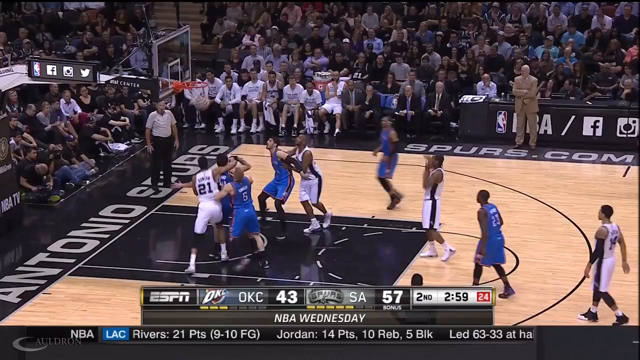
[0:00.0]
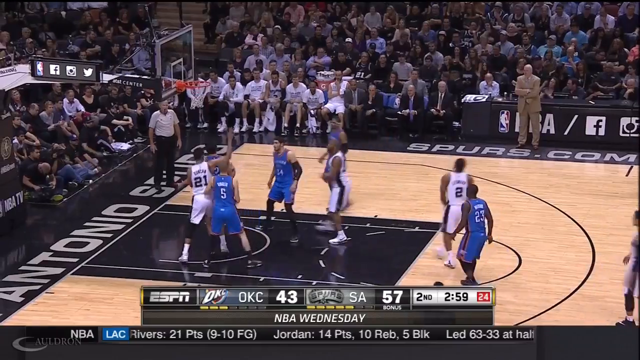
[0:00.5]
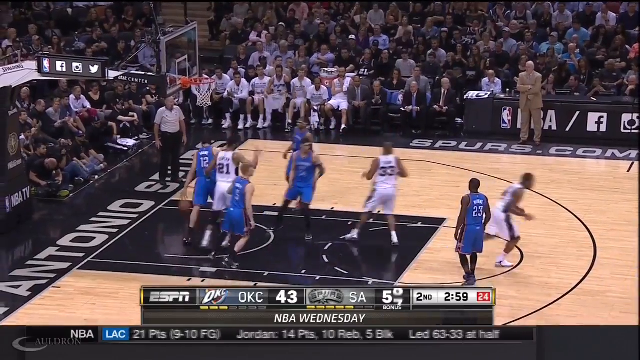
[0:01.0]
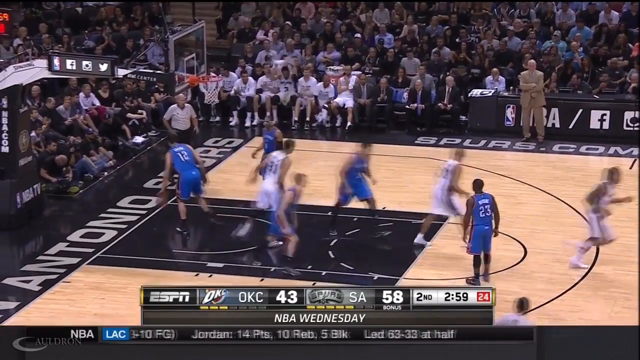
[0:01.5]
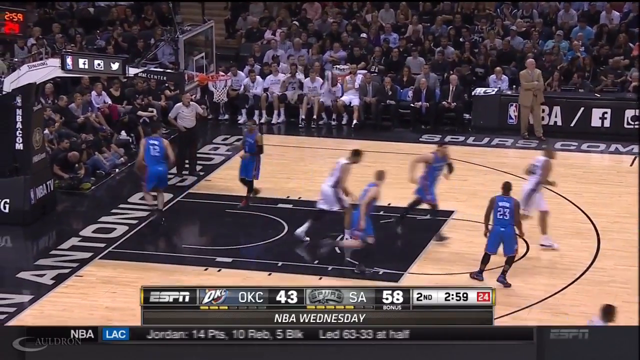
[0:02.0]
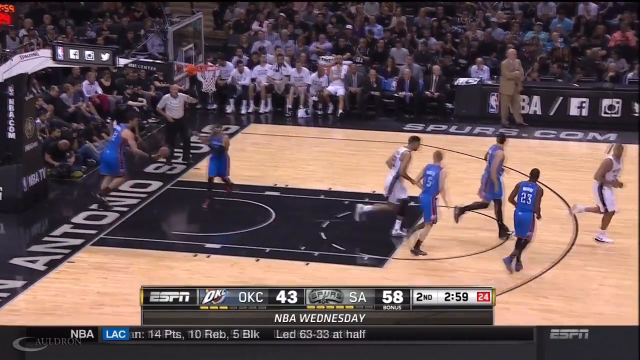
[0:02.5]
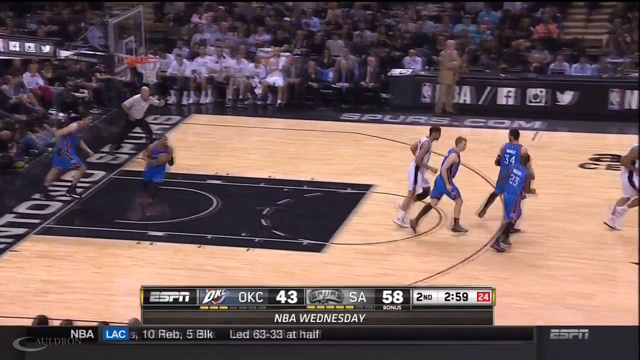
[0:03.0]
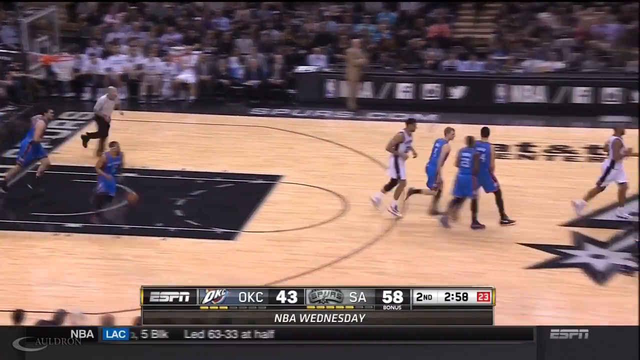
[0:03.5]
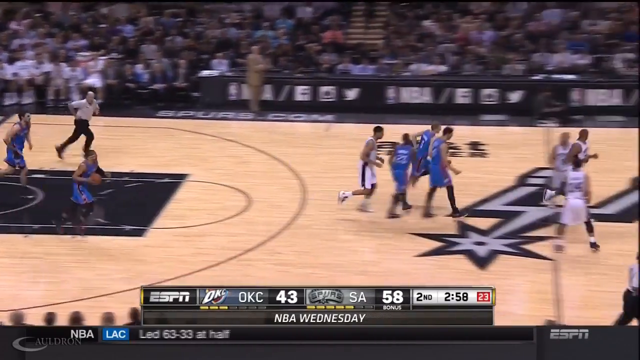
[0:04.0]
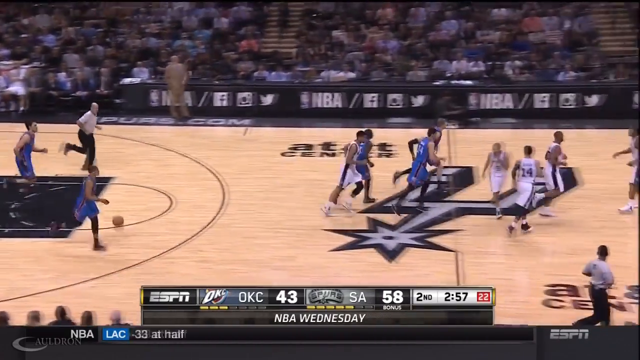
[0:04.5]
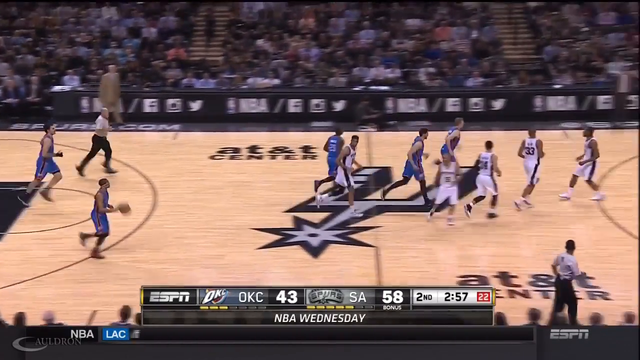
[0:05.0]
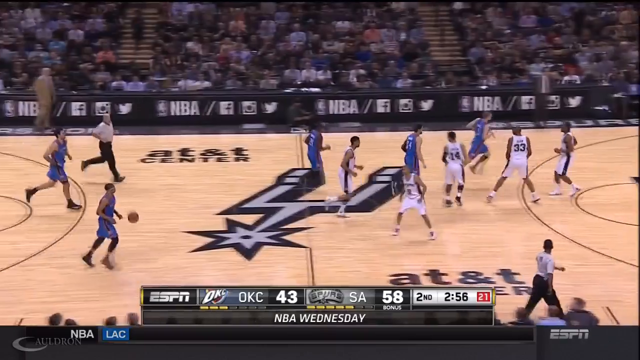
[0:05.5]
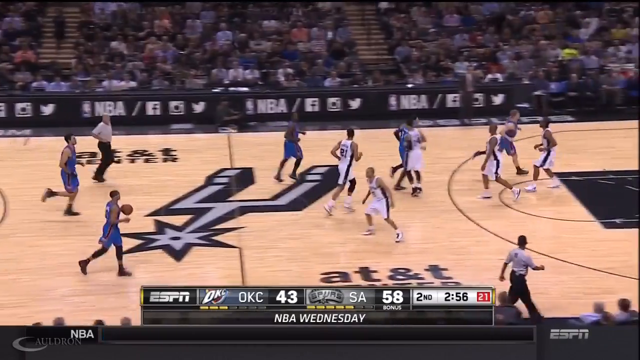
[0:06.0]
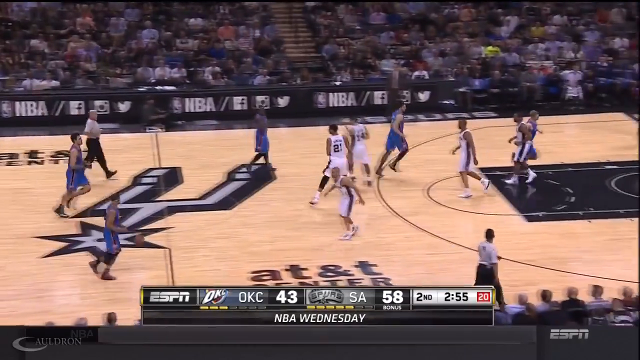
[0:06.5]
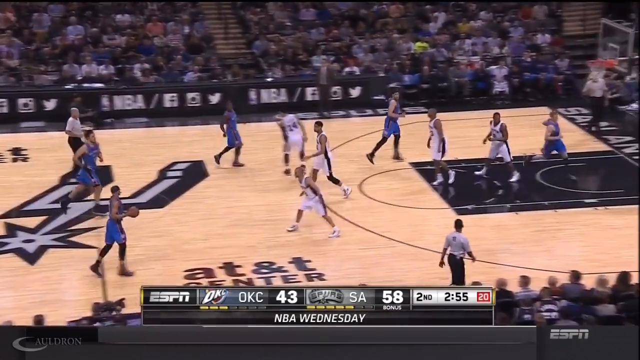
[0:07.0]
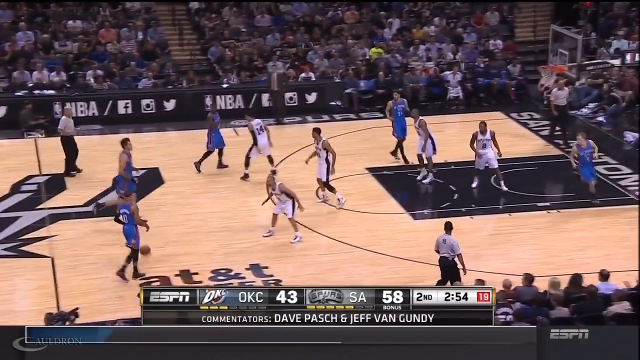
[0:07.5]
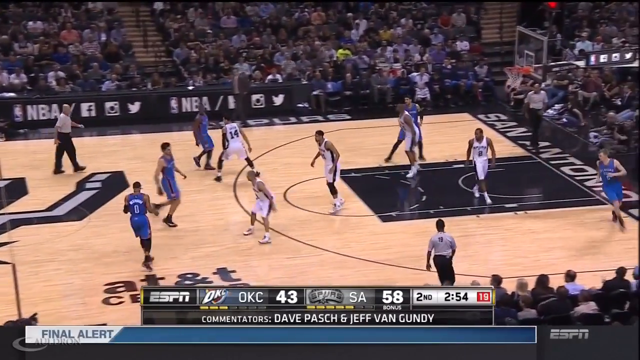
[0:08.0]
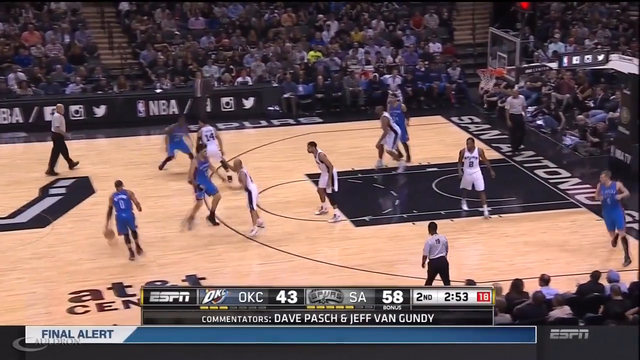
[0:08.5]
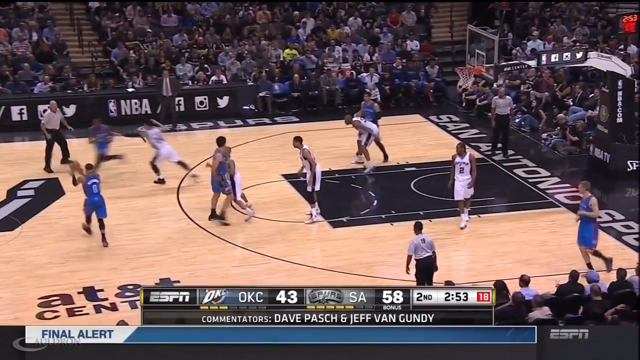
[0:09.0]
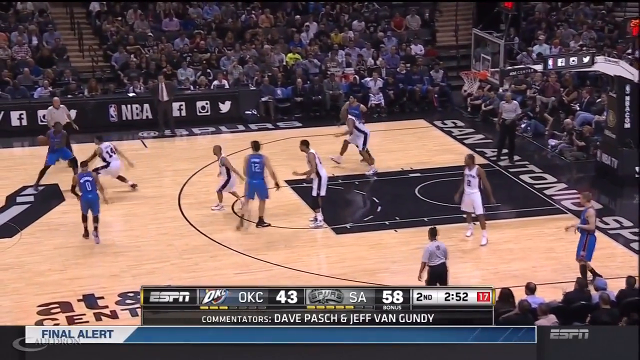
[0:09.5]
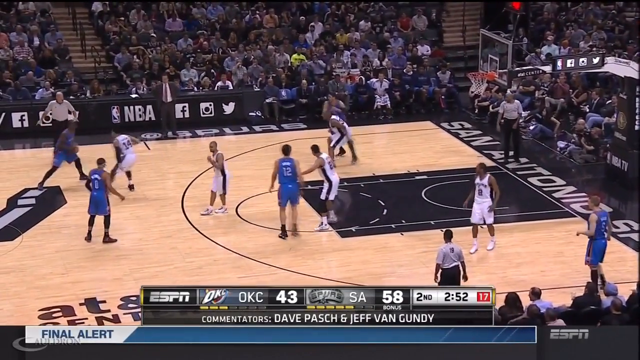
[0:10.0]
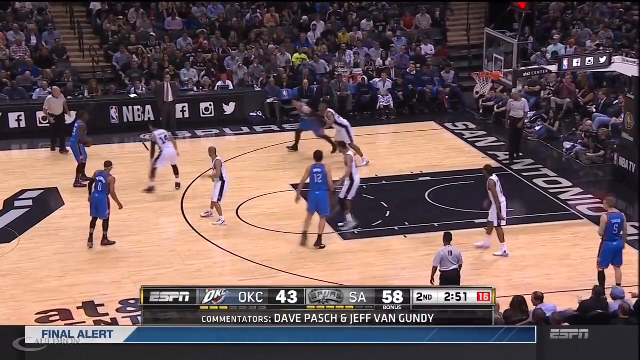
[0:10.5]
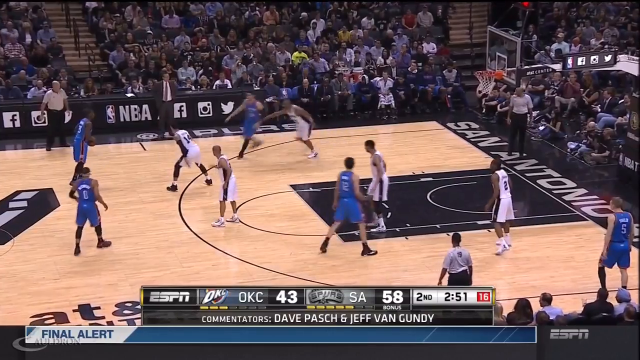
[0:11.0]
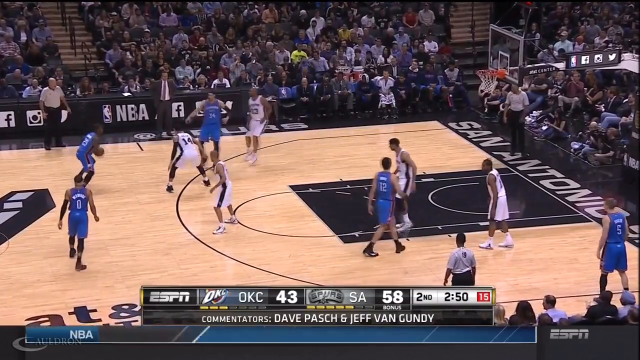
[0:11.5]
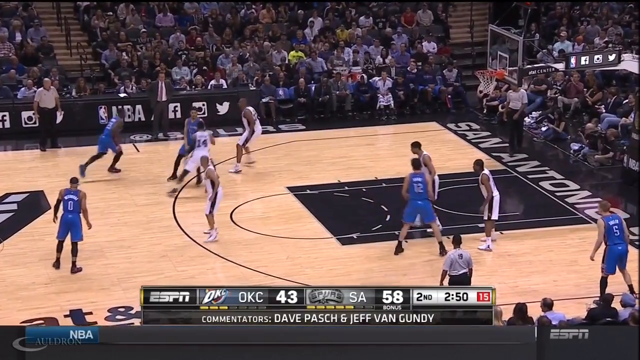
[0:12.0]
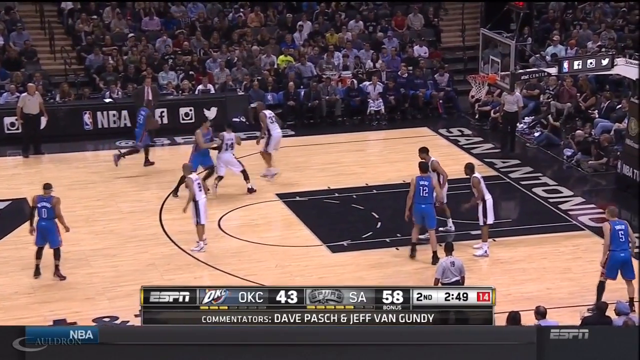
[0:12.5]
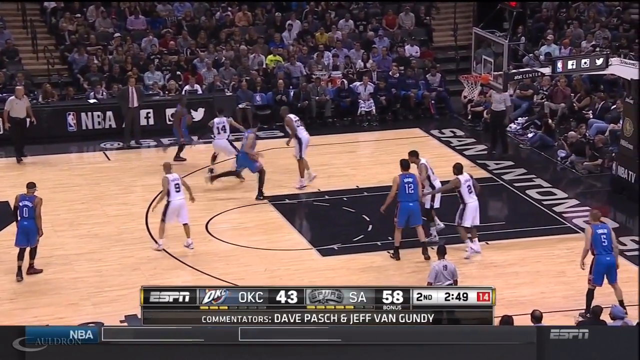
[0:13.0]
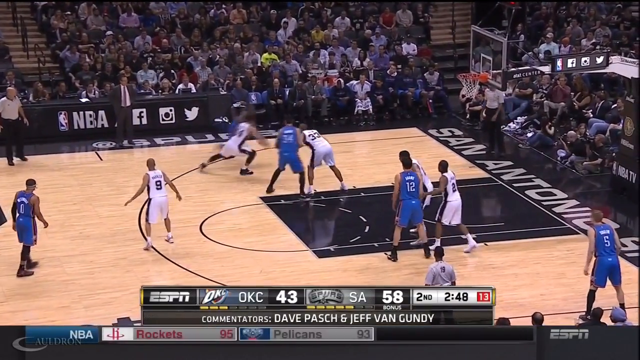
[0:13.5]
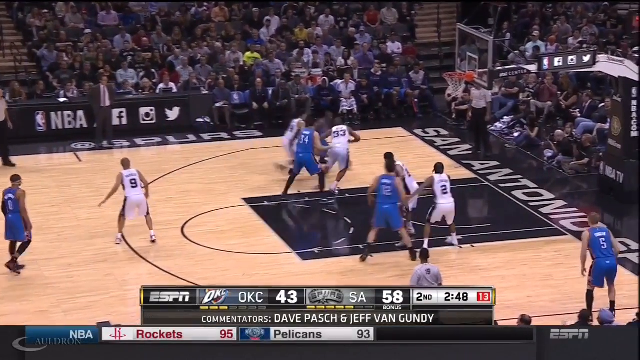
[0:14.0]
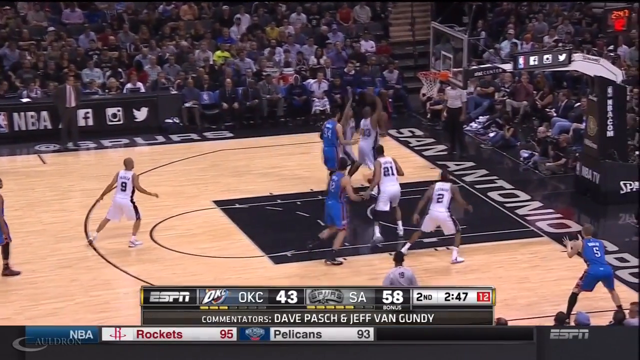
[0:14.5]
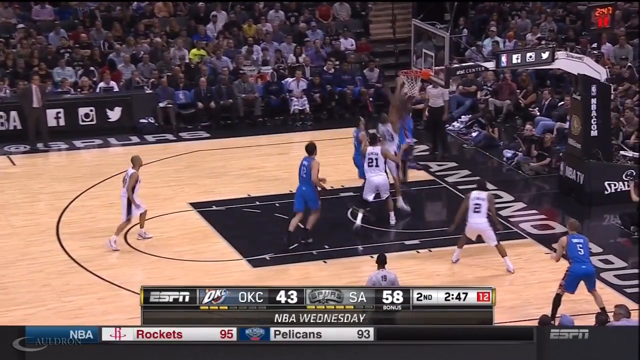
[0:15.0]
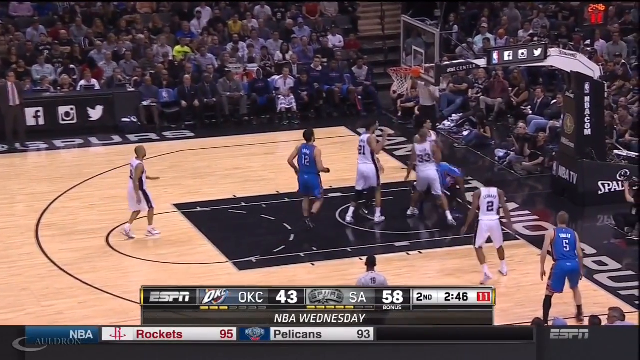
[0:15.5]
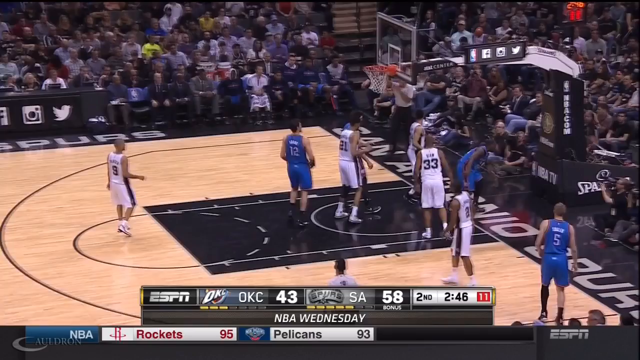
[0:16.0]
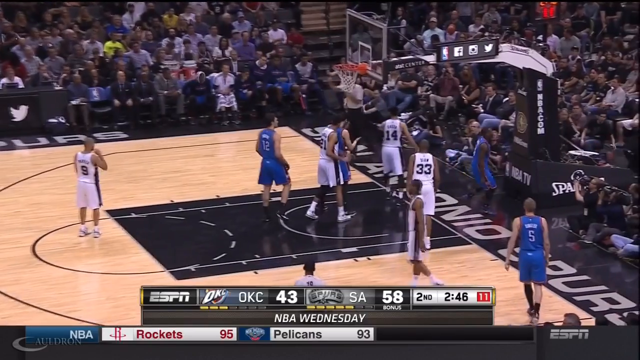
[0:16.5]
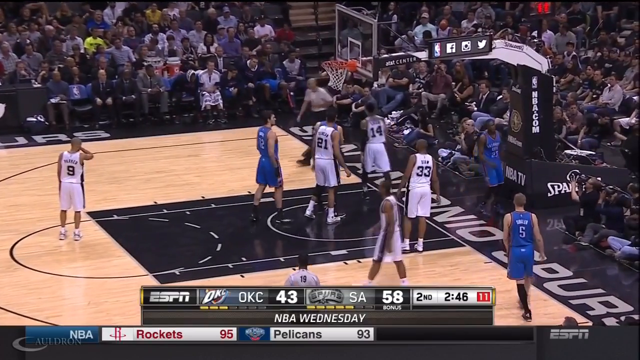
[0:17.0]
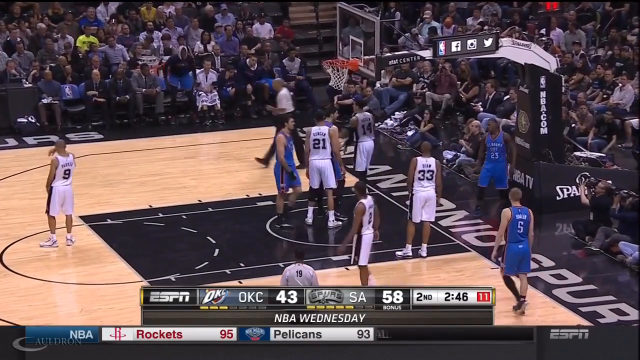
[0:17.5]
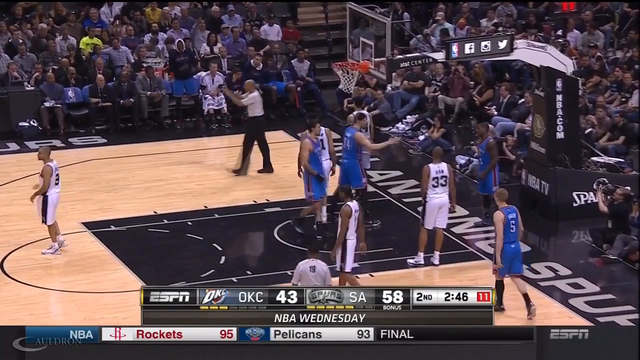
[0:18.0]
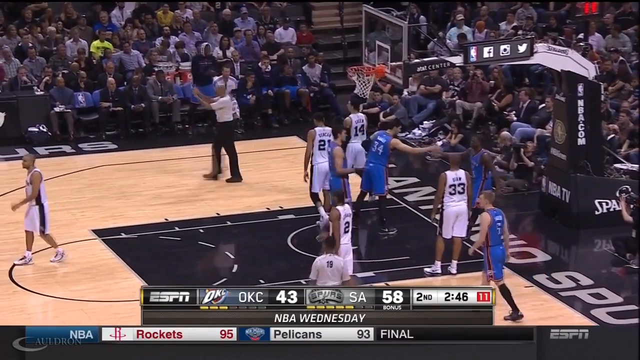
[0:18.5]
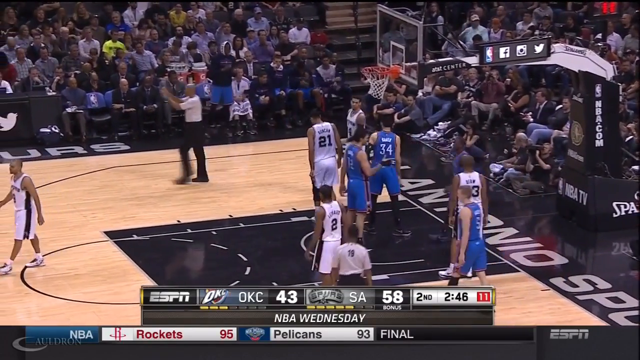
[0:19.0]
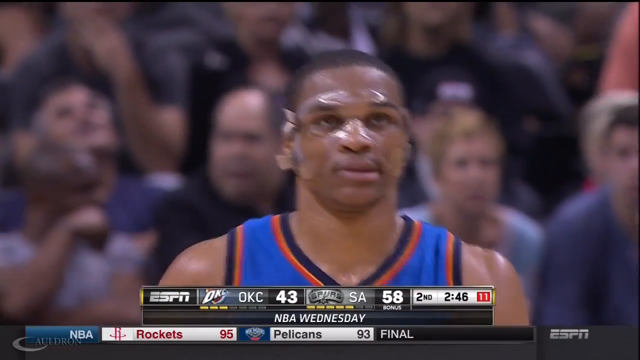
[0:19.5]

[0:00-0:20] A basketball match is in play. Players are on the court, some in a blue strip and some in white, marking the opposing teams. A scoreboard on screen shows 43 points for one team and 58 for the other. There are a few fleeting close-up shots of various players, but most of the footage is a wide-angle shot of the entire court with all the players visible and moving across it. What appears to be a referee is on the court, following the players from one end to the other and keeping an eye on things. The audience is visible around the court, mostly still and looking fixated on the game.